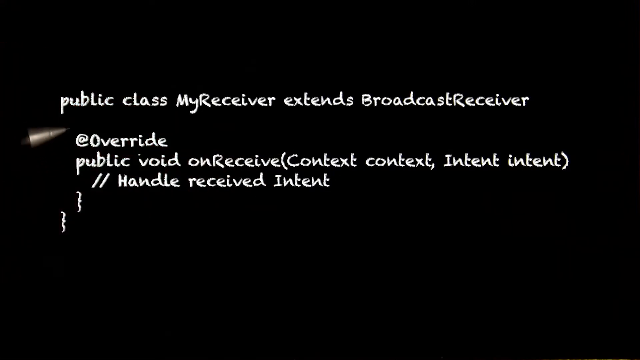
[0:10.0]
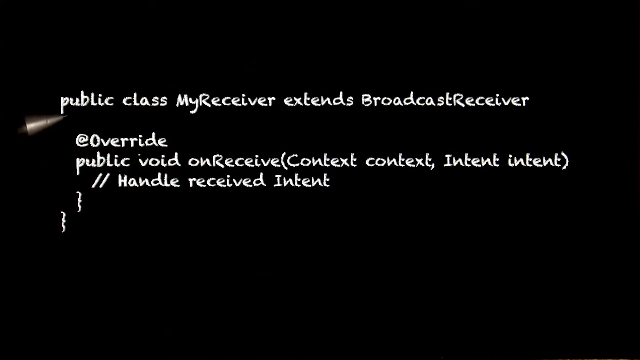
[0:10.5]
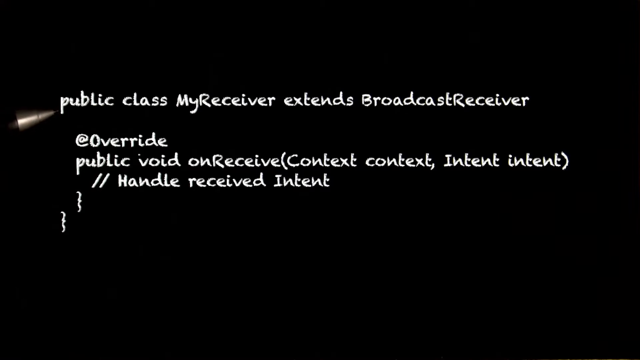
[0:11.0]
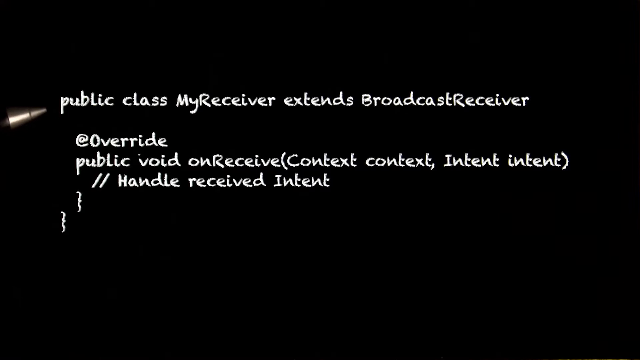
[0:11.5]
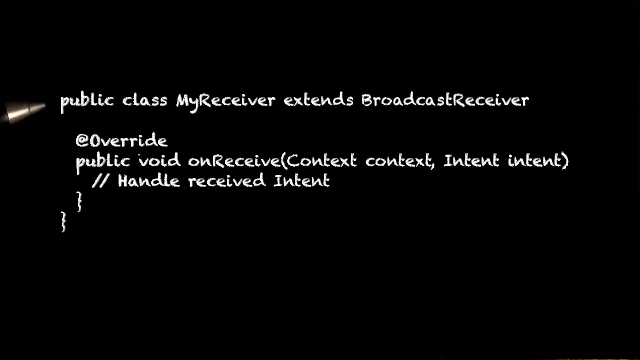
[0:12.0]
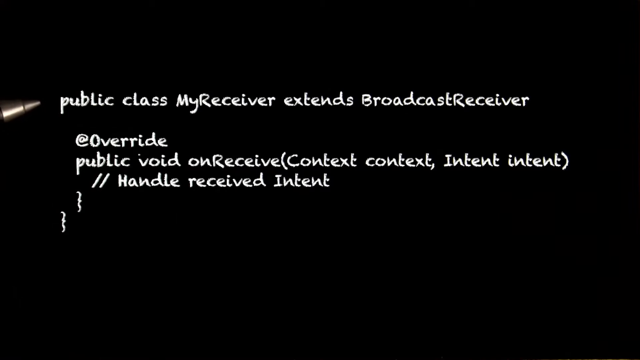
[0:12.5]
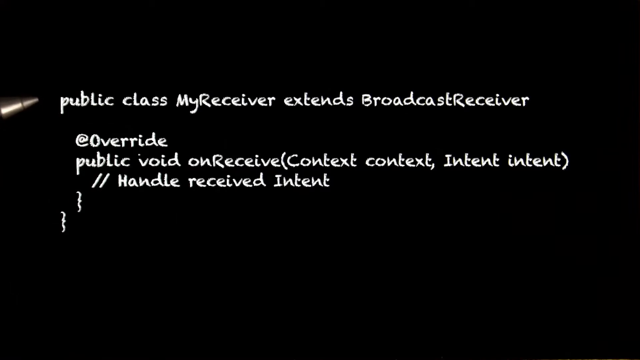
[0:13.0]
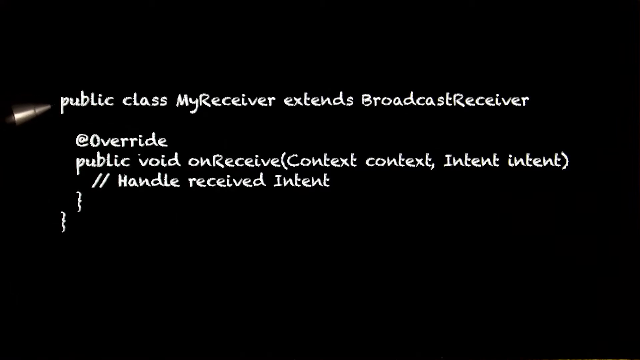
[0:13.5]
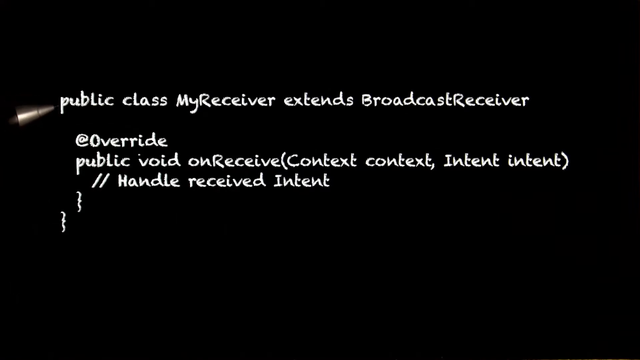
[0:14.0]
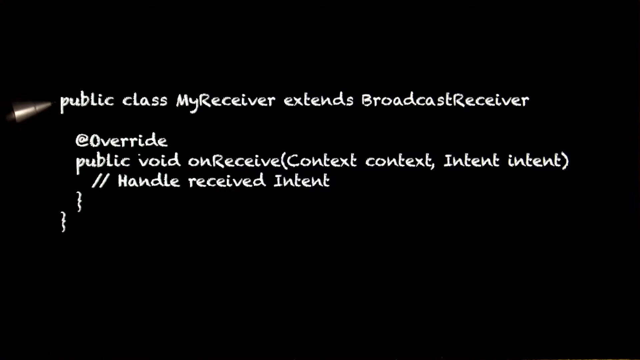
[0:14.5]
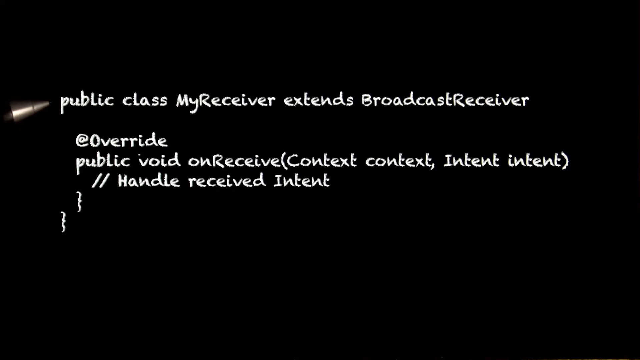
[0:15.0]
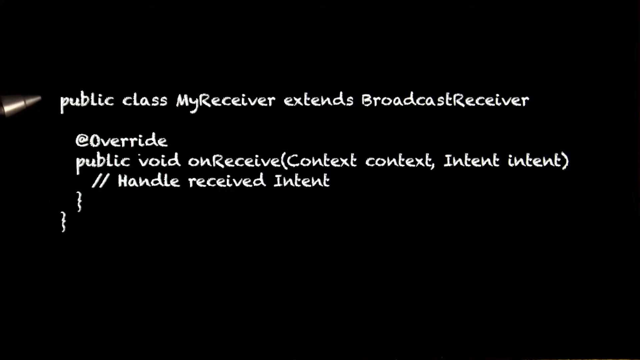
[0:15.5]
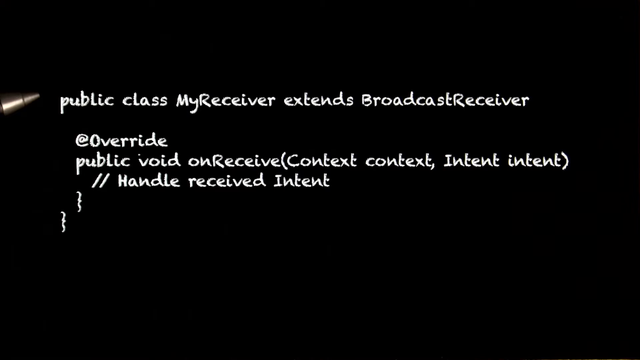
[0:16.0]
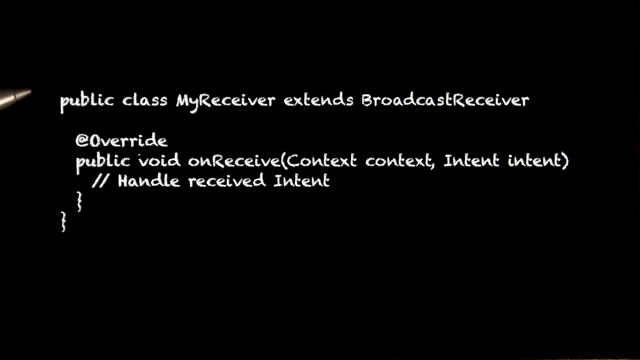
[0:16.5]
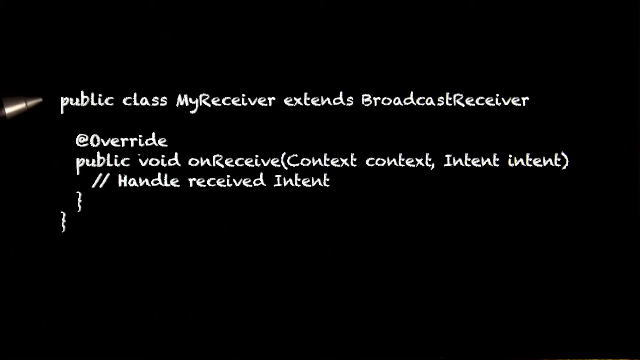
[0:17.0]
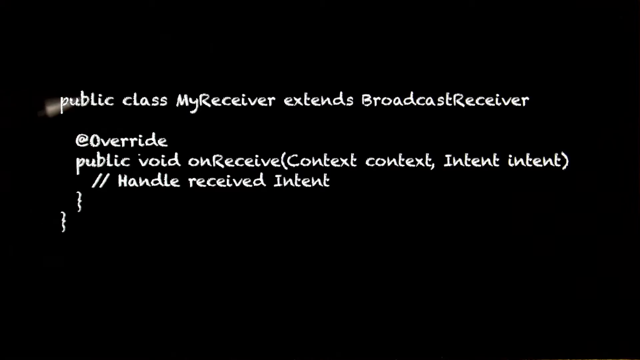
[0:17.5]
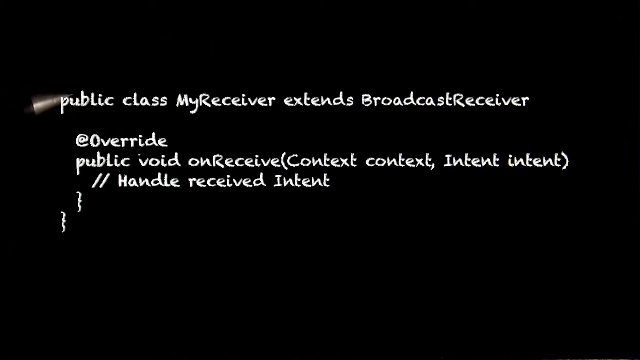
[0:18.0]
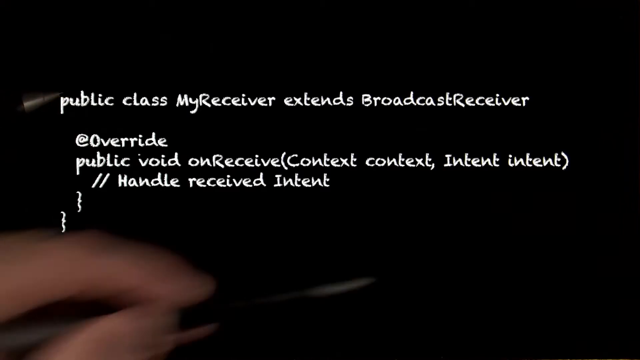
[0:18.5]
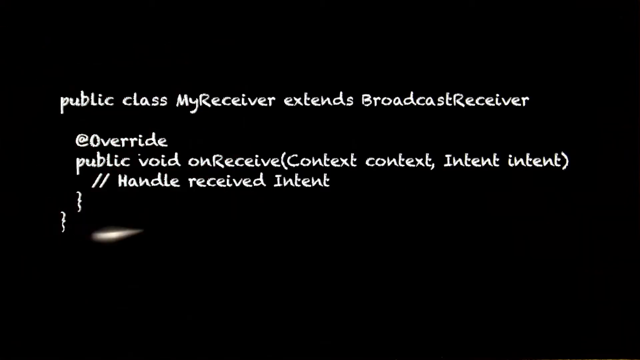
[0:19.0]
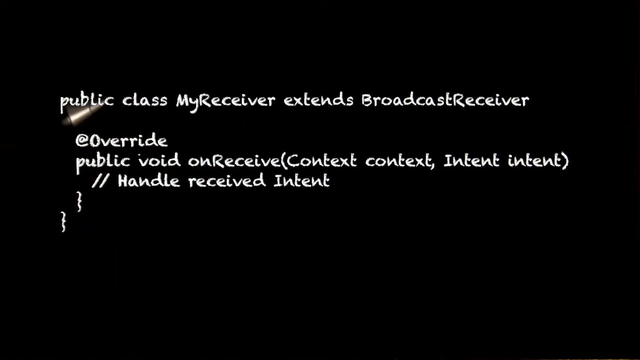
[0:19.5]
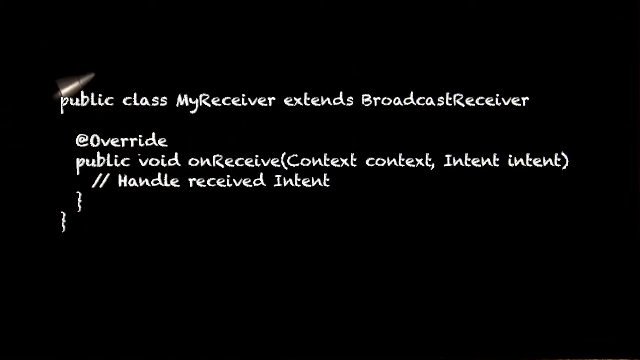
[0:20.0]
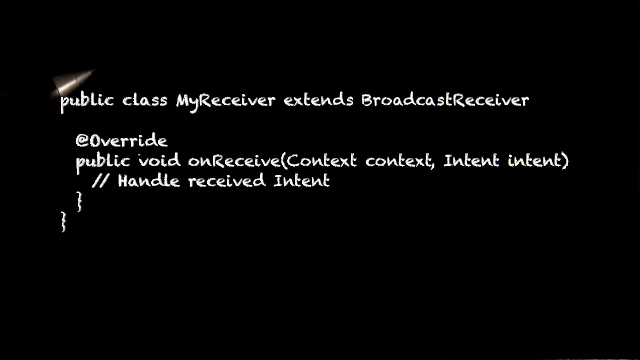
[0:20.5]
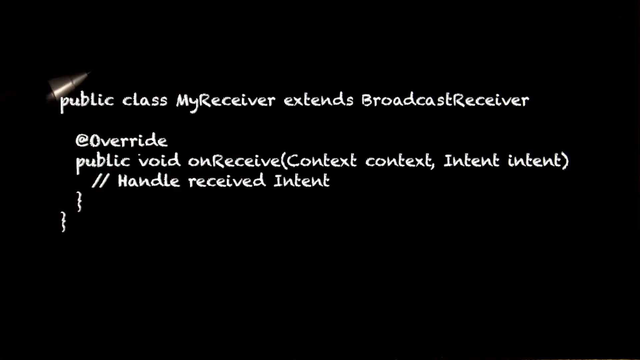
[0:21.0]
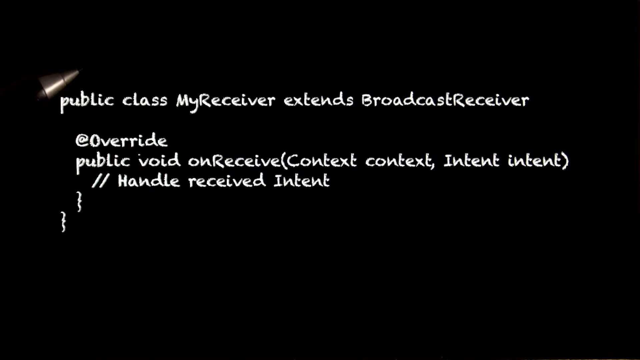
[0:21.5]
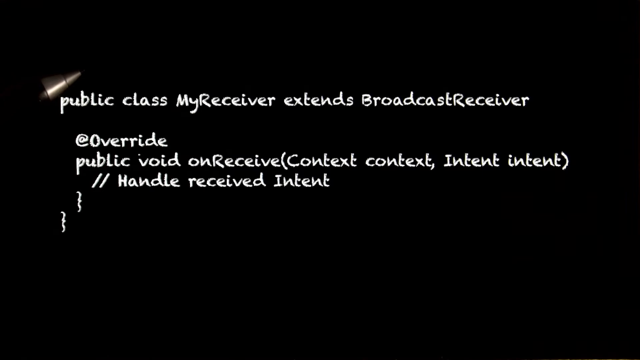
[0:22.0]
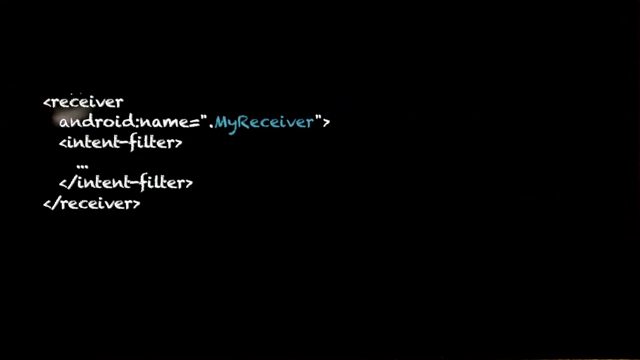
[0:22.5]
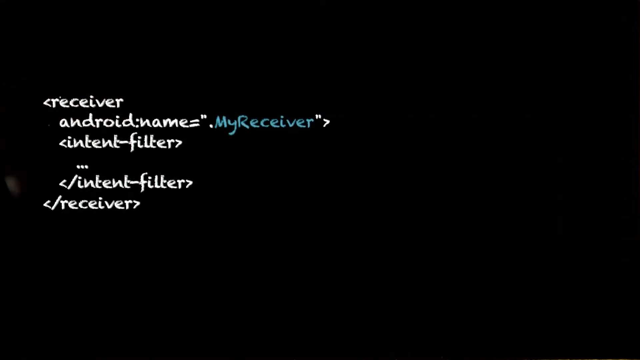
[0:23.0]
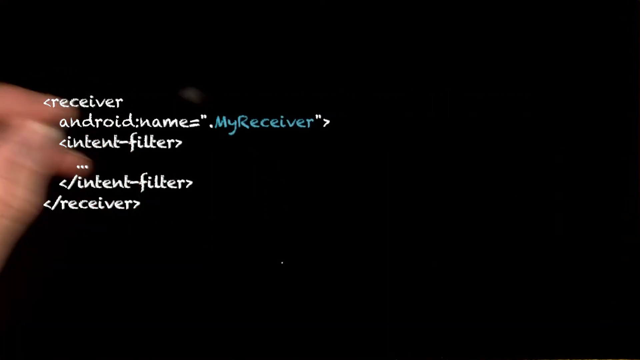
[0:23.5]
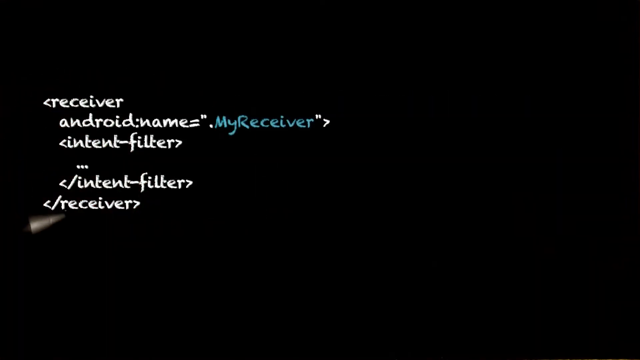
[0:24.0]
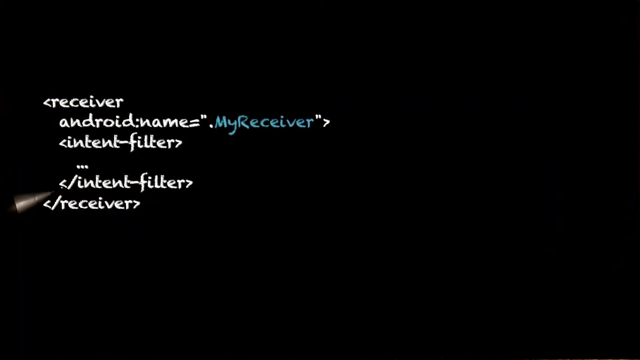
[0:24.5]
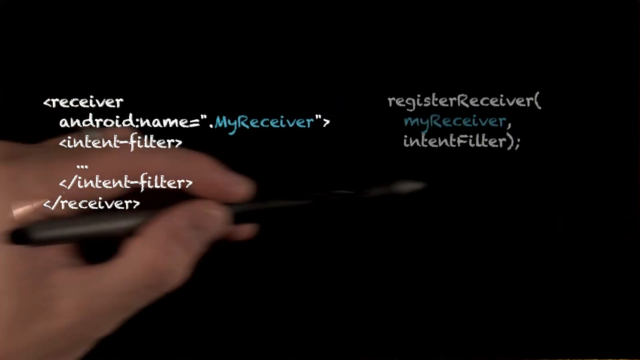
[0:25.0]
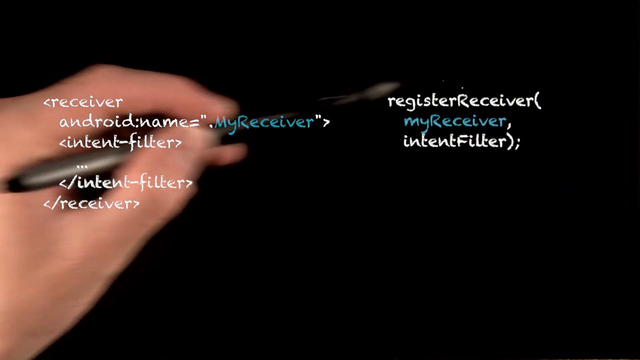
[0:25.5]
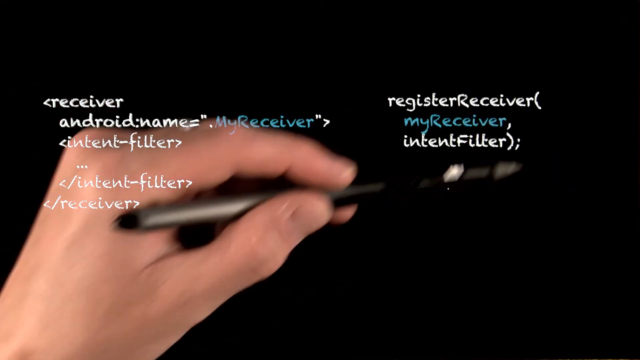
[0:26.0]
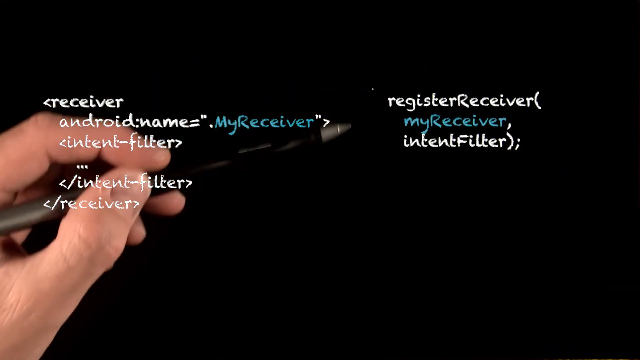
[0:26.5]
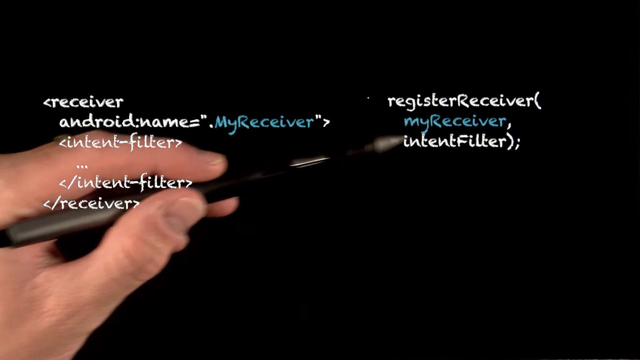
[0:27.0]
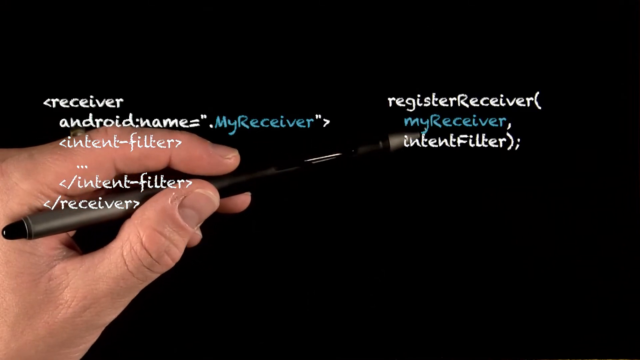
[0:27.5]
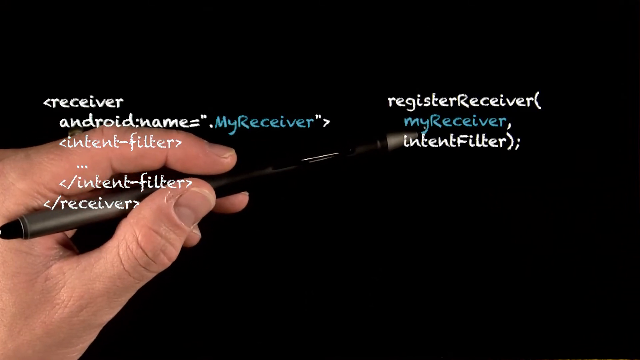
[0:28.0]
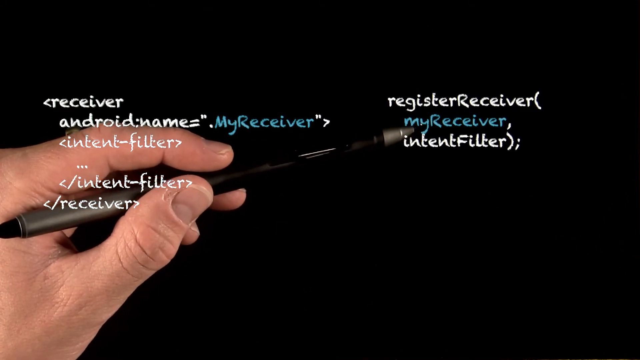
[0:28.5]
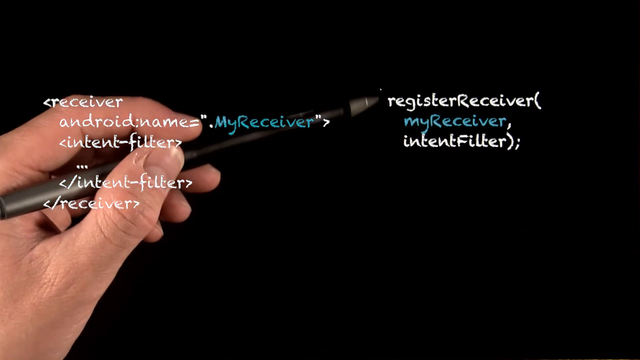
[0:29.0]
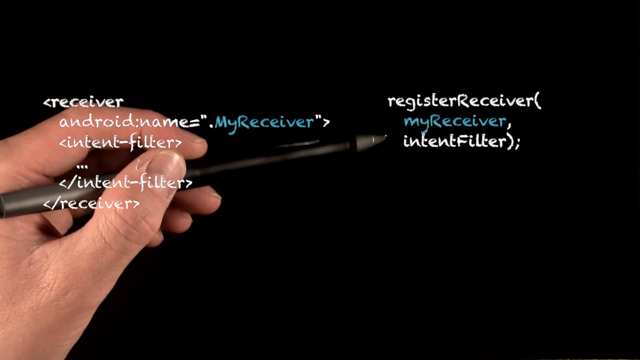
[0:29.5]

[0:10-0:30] Text on the screen reads "public class my receiver extends broadcast receiver," then "override public void on receive context context intent intent," and then "handle received intent," a piece of code typed onto the front of the video, which seems to be some type of technology video. In the background, someone moves their hand around at the back of the screen, holding a pen and using it to draw on what appears to be some type of computer screen. The entire background is black, and the pen is black except for a silverish tip. The hand moves in a circular motion as it draws on the board at the back.